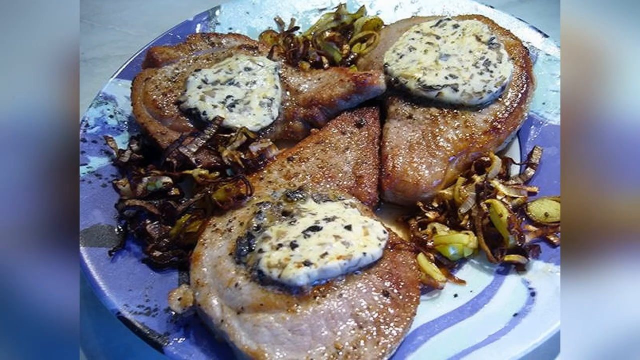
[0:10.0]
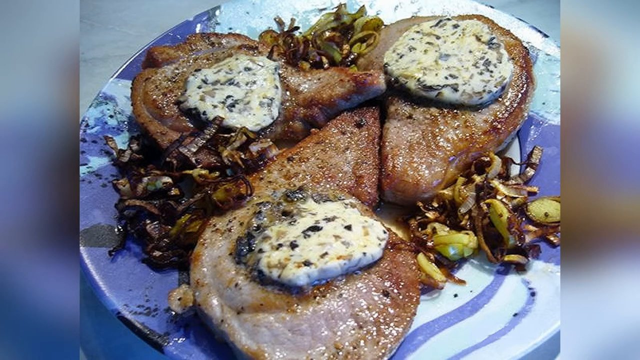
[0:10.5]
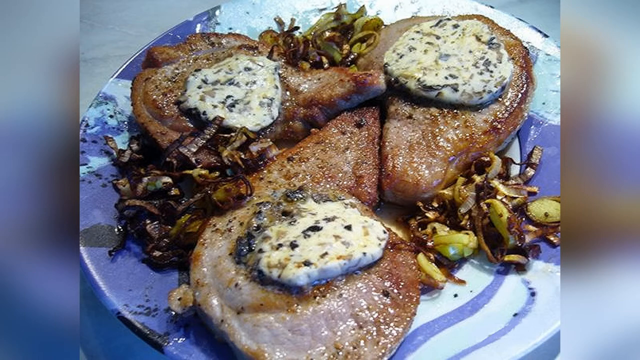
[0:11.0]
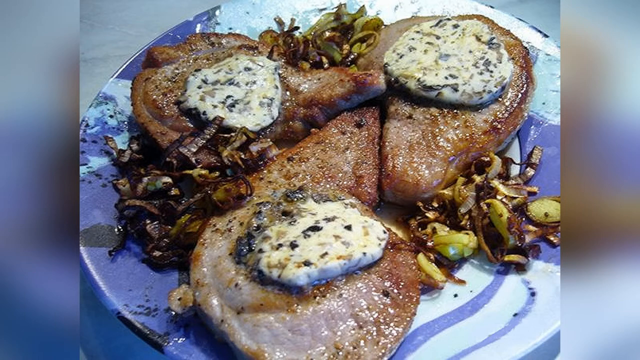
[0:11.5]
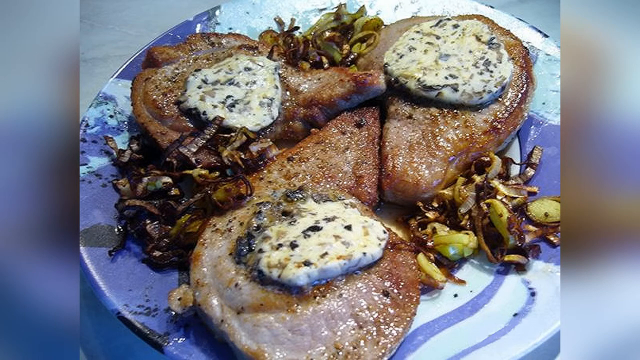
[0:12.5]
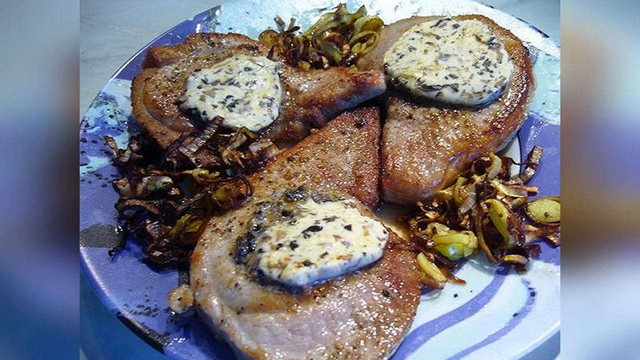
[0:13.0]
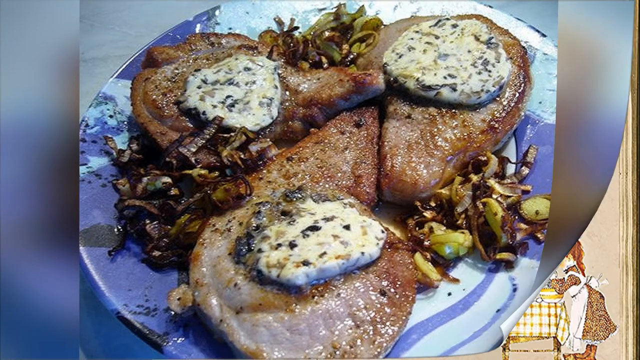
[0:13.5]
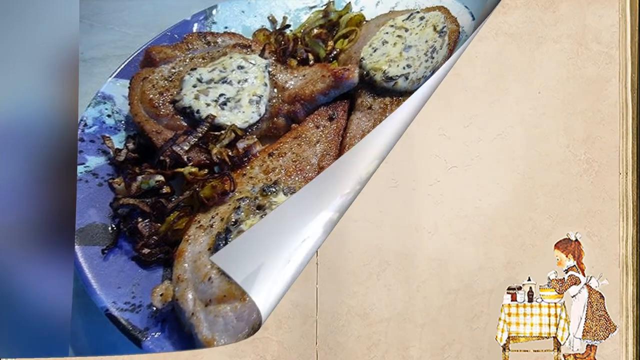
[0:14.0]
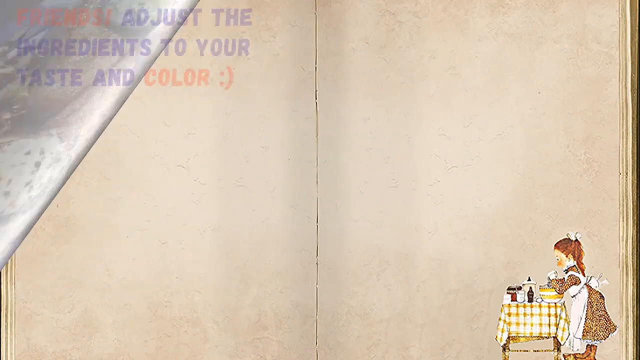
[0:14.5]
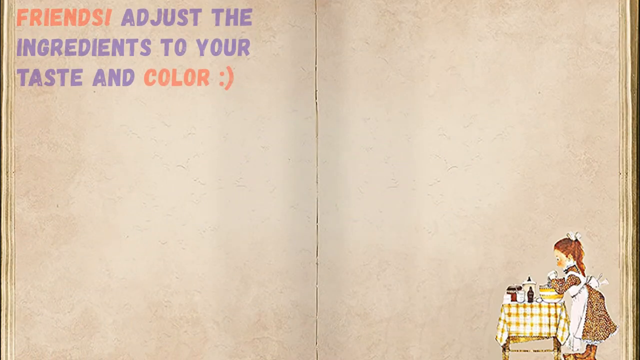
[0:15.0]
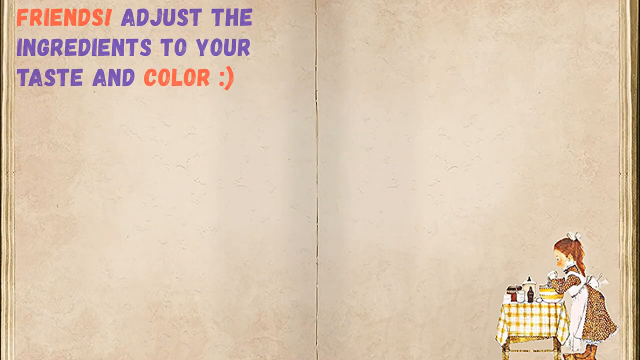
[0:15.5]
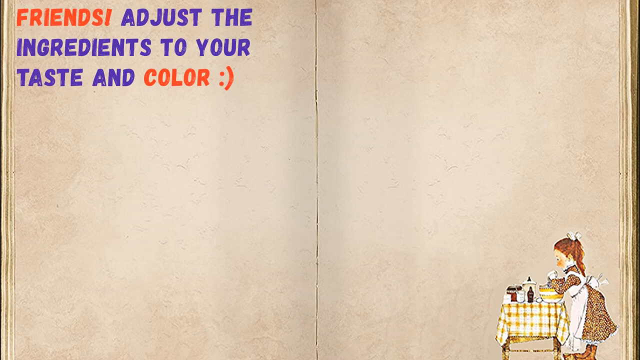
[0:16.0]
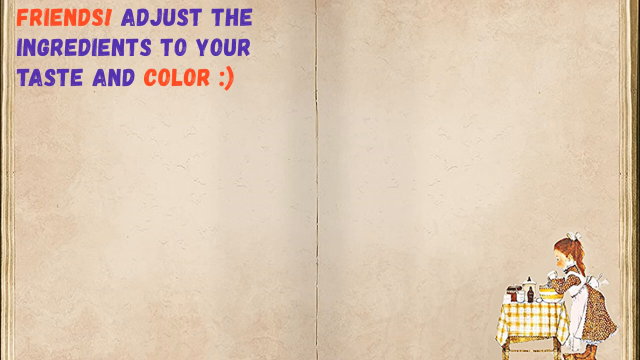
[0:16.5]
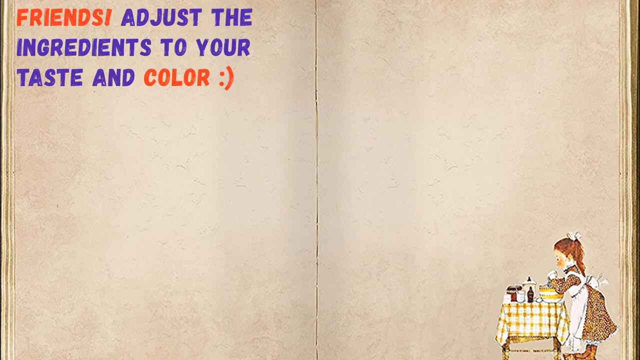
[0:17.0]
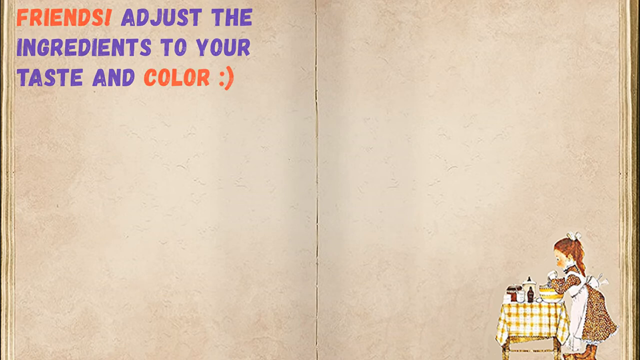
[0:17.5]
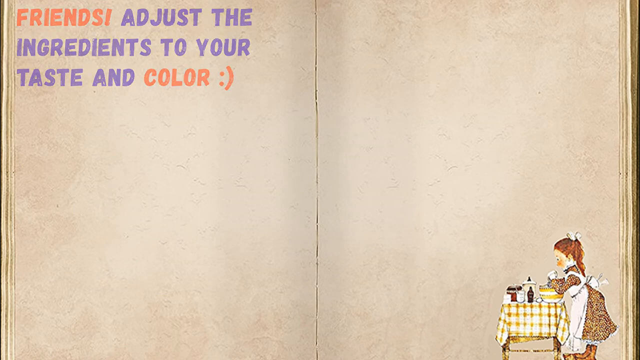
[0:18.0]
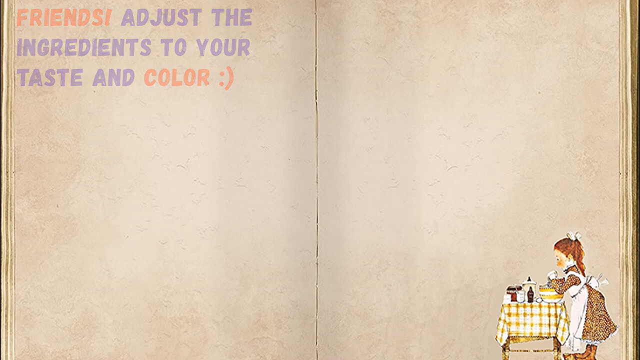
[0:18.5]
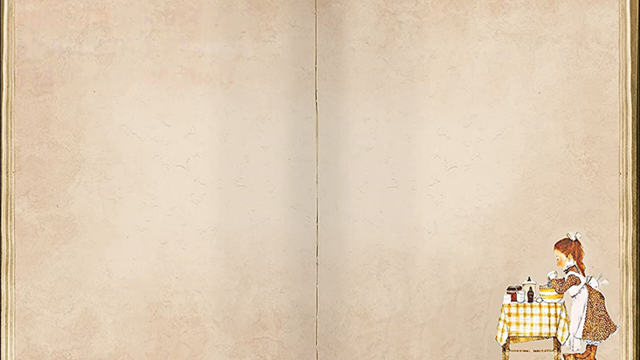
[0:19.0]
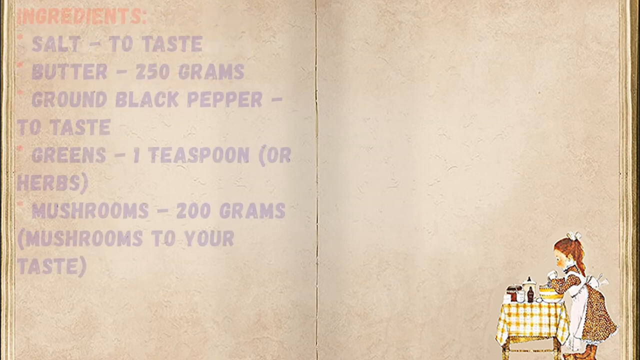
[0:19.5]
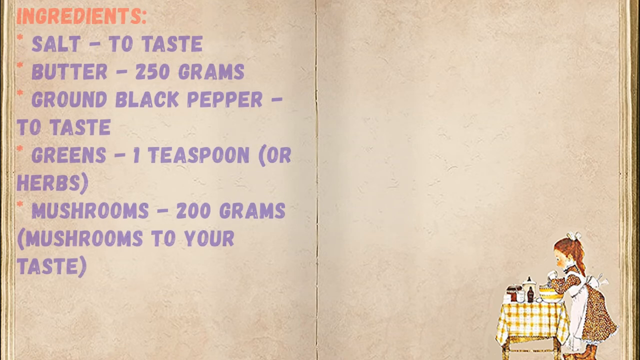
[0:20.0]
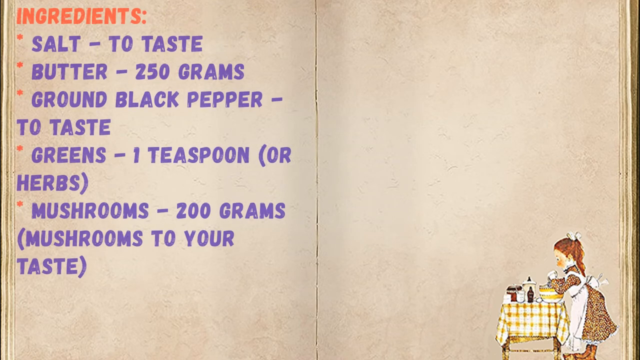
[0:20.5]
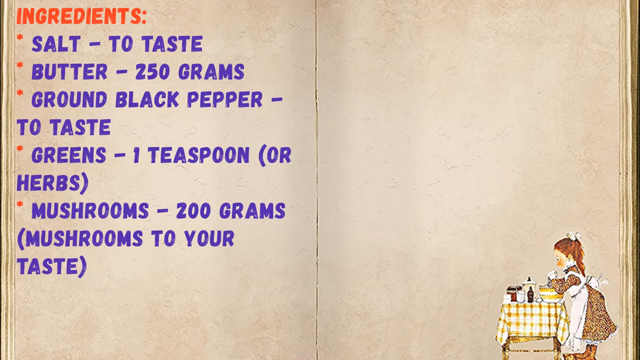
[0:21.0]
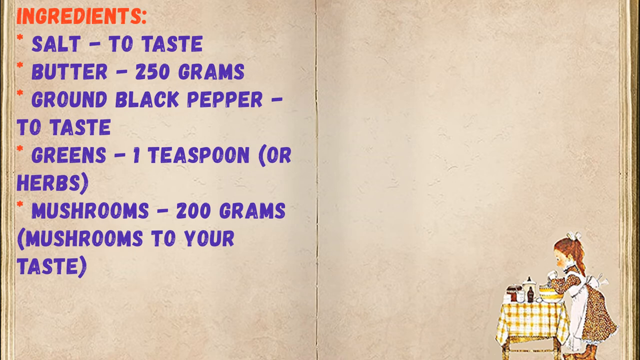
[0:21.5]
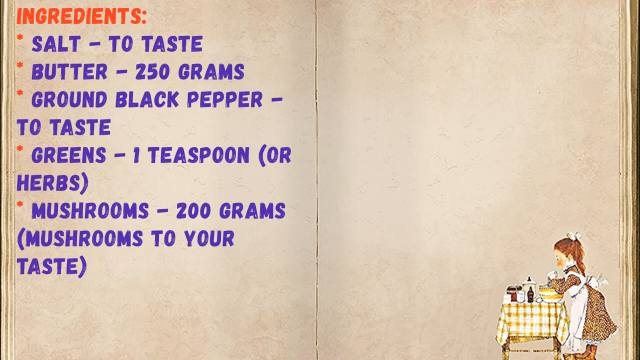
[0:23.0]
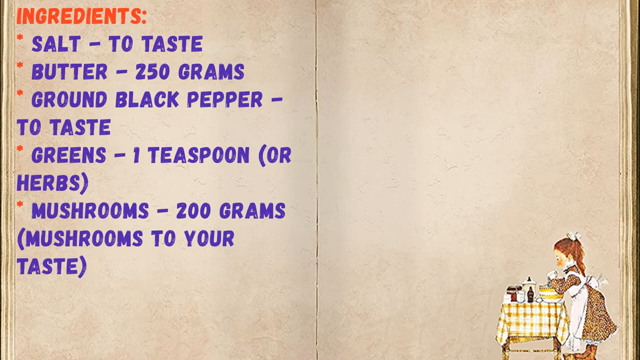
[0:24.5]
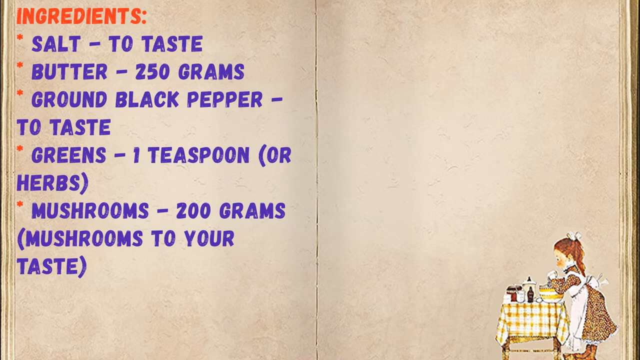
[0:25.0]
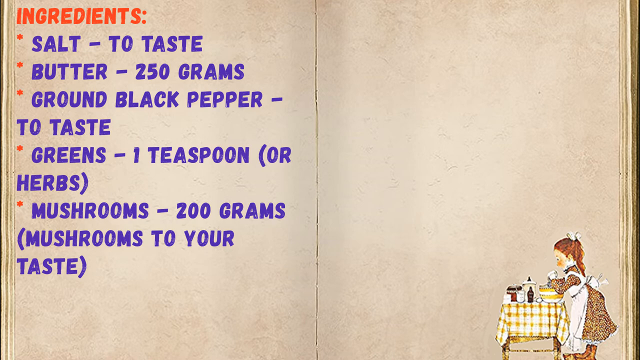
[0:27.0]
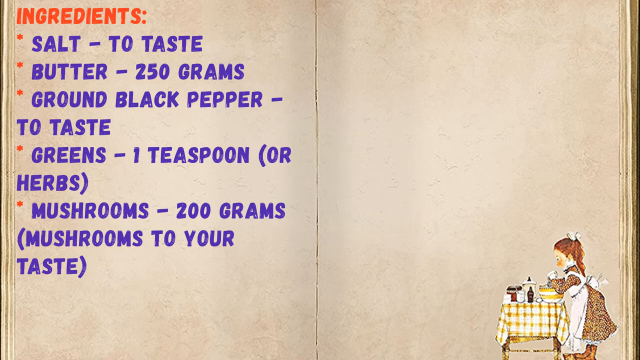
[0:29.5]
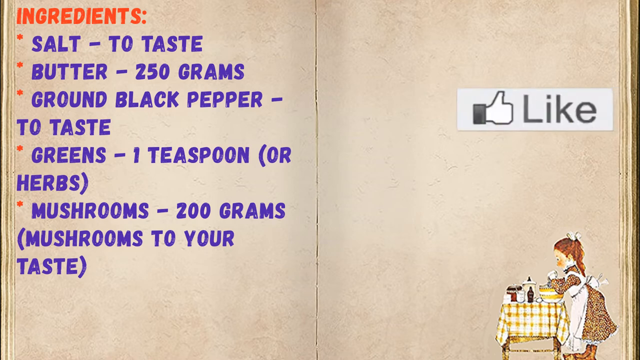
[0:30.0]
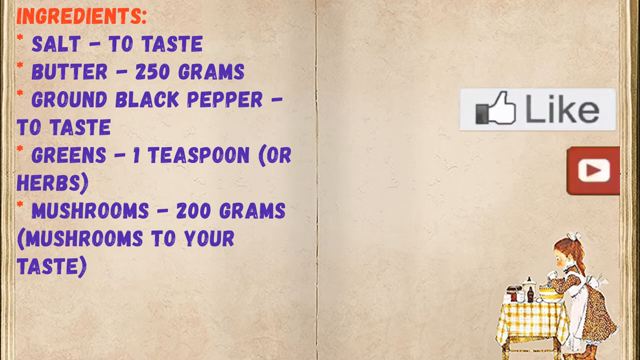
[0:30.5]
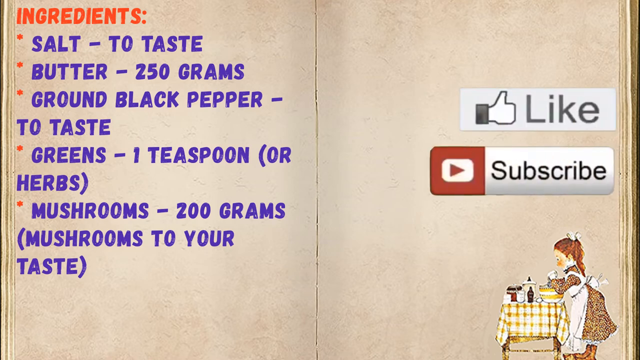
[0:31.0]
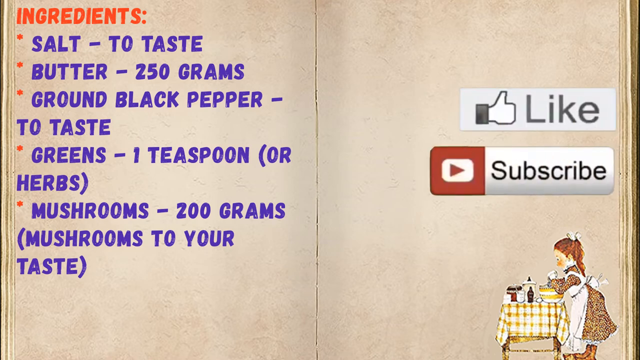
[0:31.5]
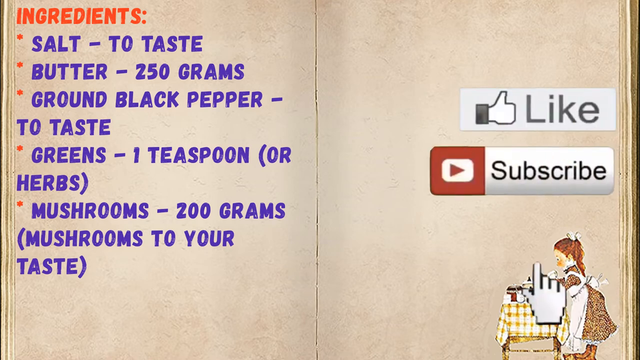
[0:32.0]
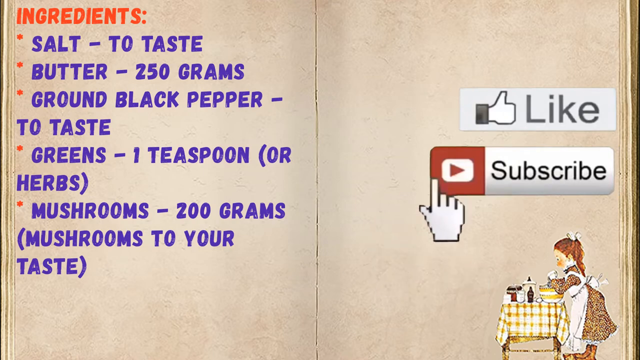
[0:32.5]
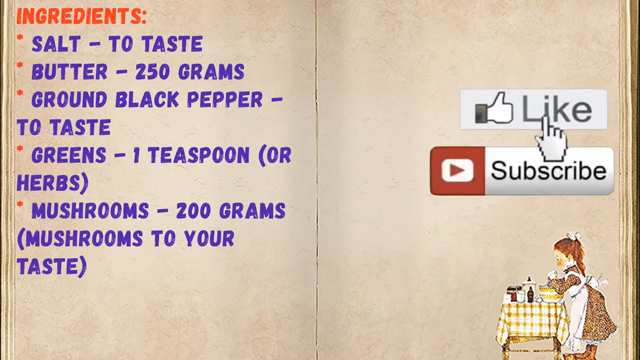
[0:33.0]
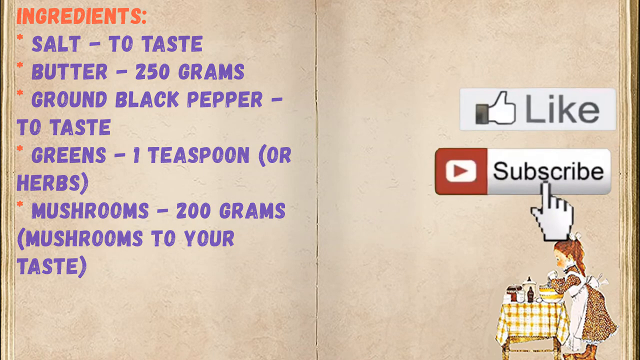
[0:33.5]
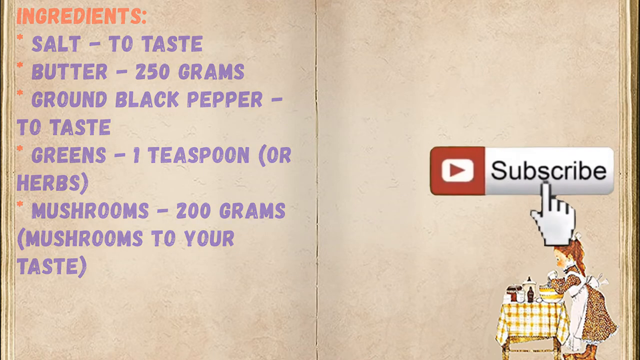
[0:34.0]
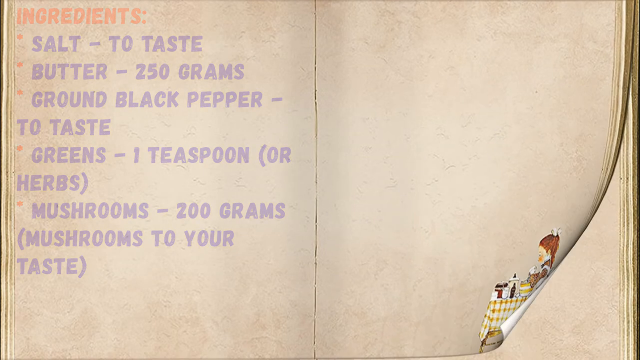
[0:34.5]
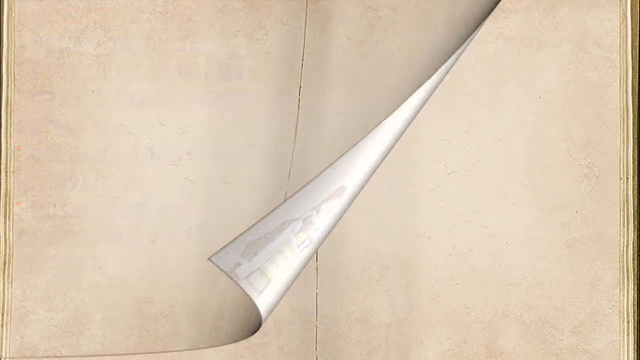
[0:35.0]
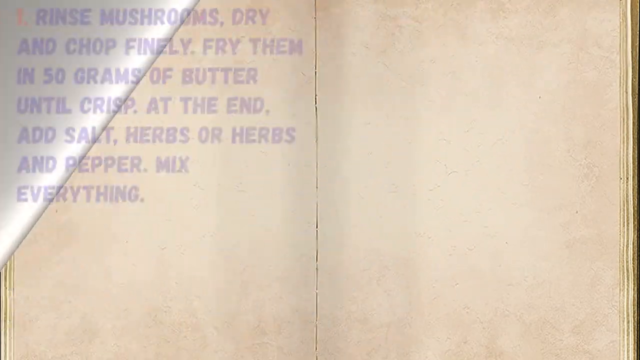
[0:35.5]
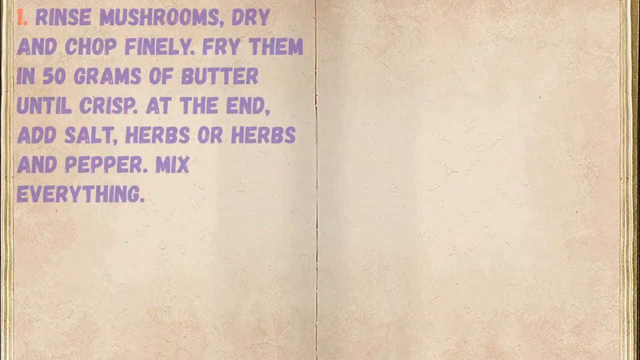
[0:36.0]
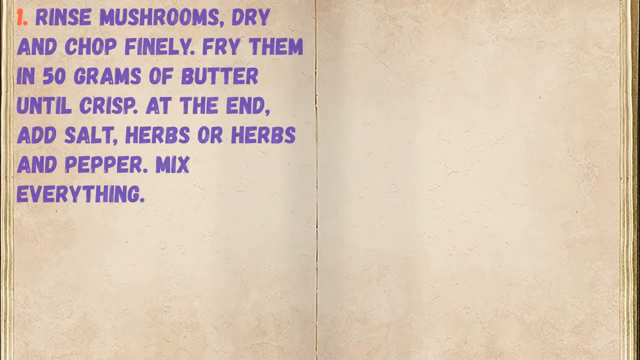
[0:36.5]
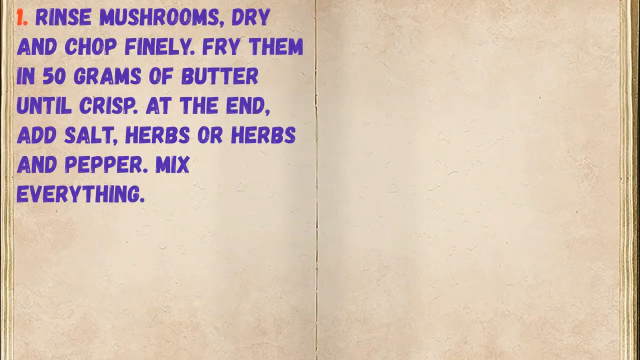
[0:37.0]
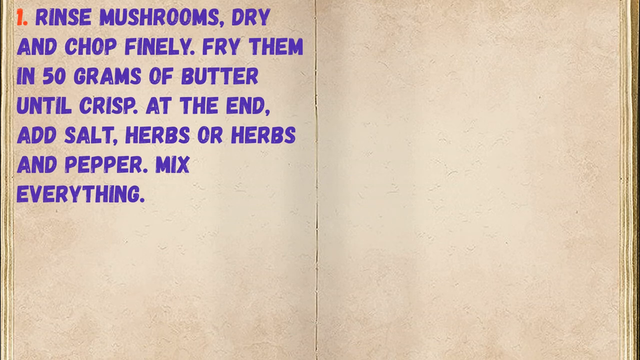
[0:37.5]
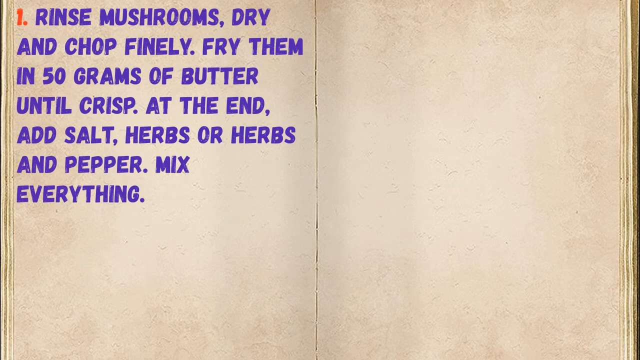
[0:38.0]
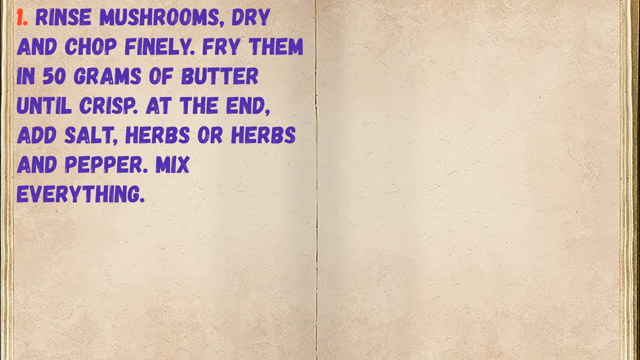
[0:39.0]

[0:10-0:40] A meal sits out on a blue plate: apparently three pieces of meat, each topped with what looks like cooked mushrooms or some white sauce, with other things sliced up and placed around it. The scene then transitions to a graphic, kind of like a cookbook, with text reading "Friends, adjust the ingredients to your taste and color." An ingredients list appears on the left side: "salt to taste, butter, 250 grams, ground black pepper to taste, greens, one teaspoon or herbs, mushrooms, 200 grams, mushrooms to your taste." Like and subscribe buttons appear on the right side; the like button is for Facebook and the subscribe button is for YouTube. Additional text reads "Rinse mushrooms, dry and chop finely. Fry them in 50 grams of butter until crisp. At the end add salt, herbs or herbs and pepper. Mix everything."